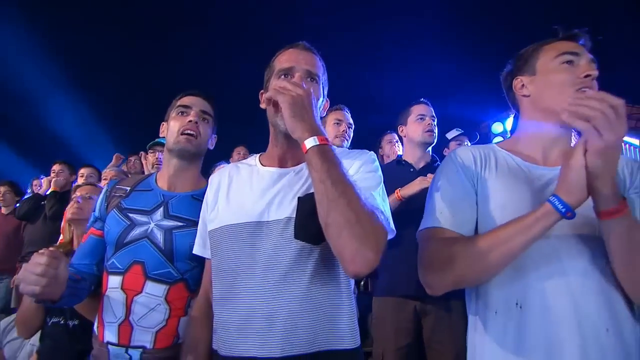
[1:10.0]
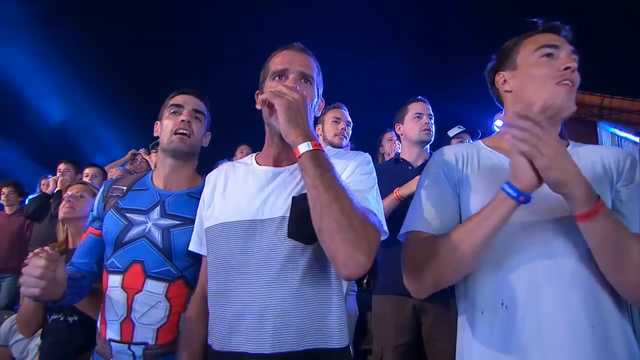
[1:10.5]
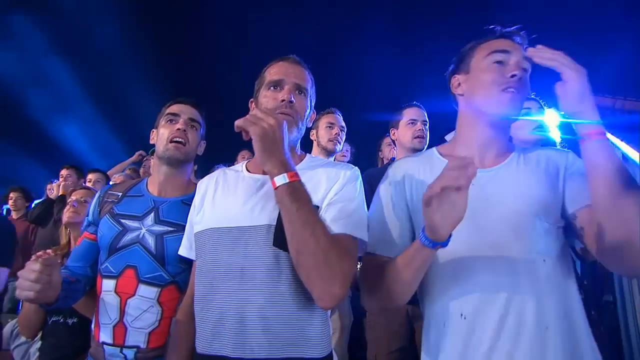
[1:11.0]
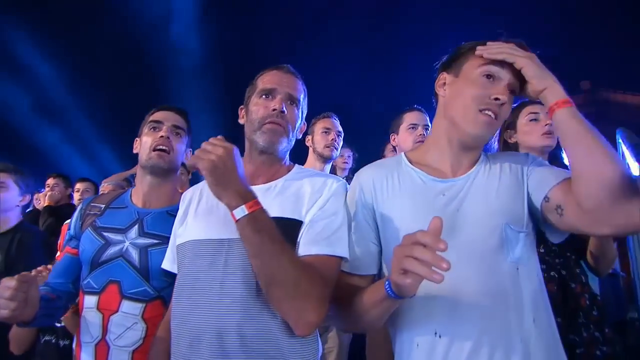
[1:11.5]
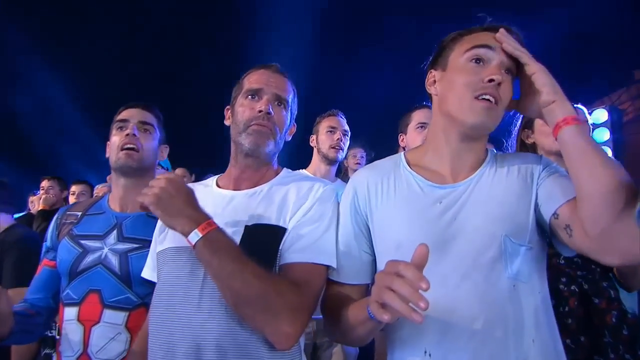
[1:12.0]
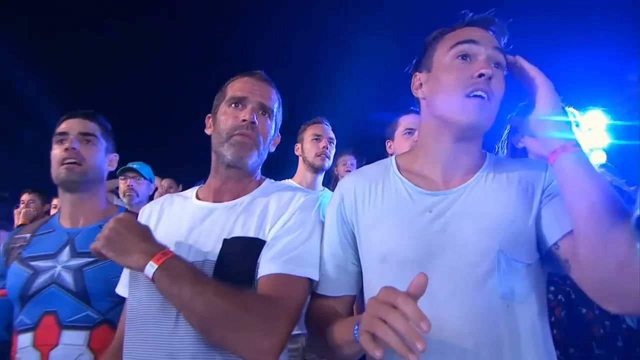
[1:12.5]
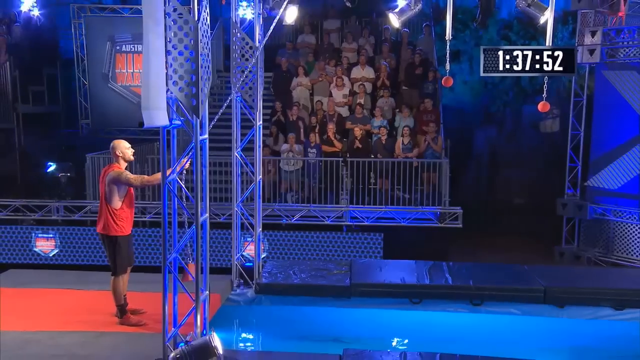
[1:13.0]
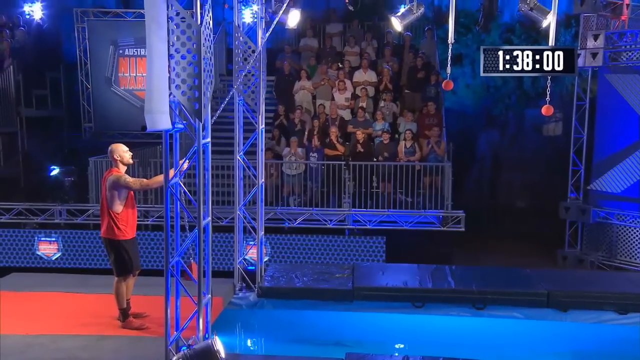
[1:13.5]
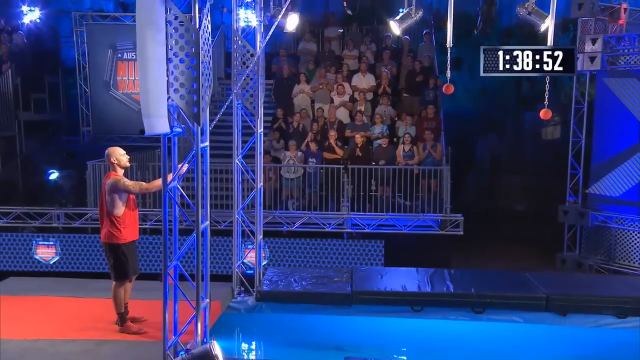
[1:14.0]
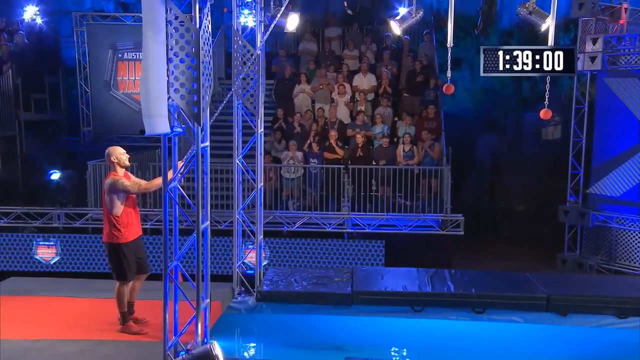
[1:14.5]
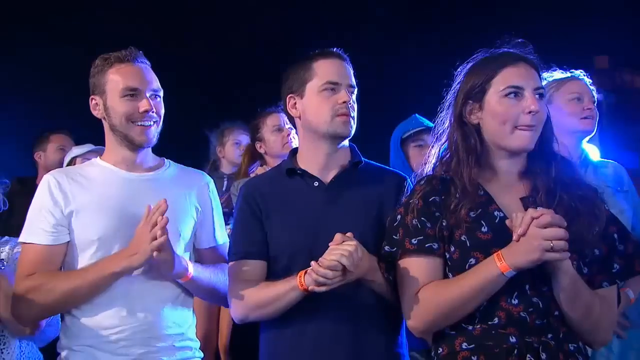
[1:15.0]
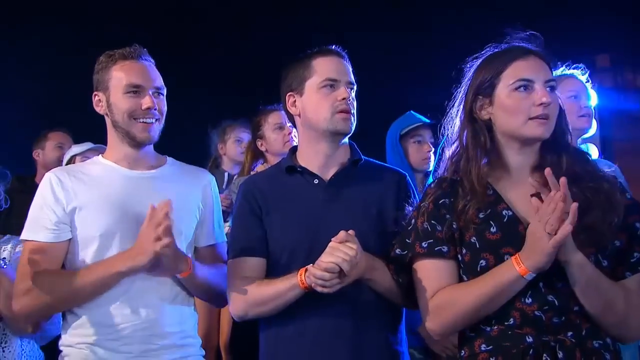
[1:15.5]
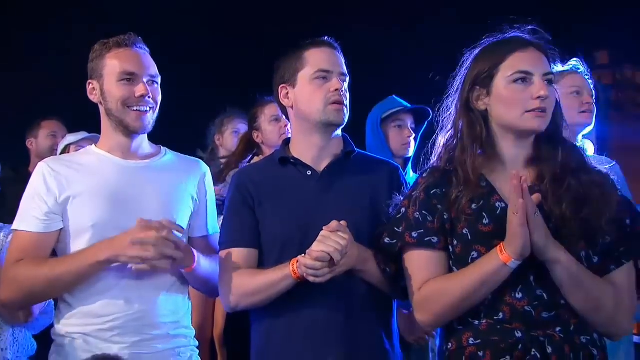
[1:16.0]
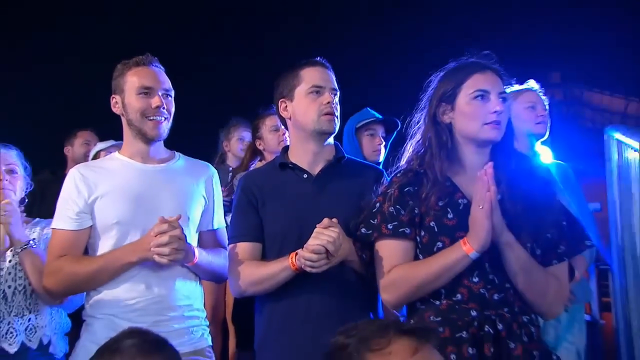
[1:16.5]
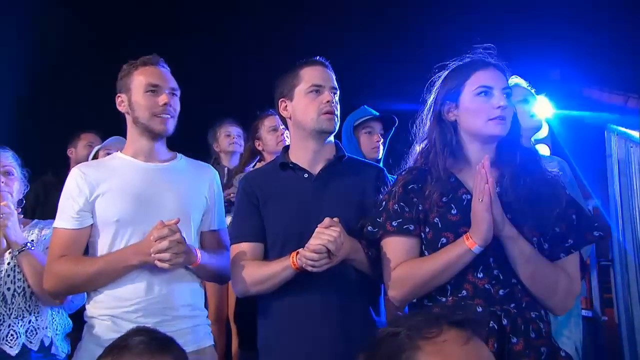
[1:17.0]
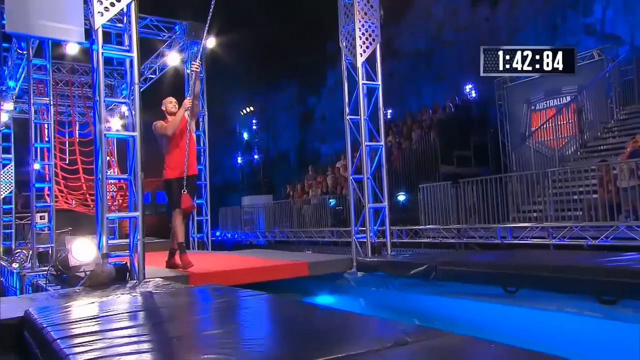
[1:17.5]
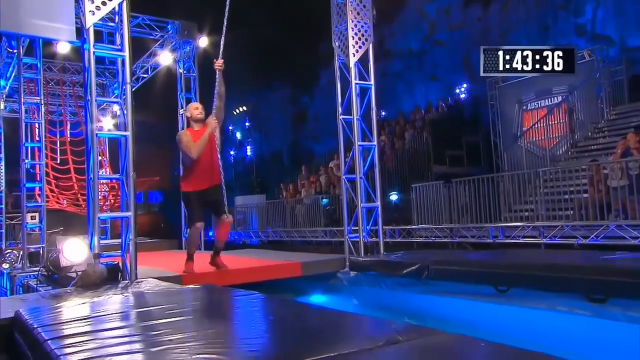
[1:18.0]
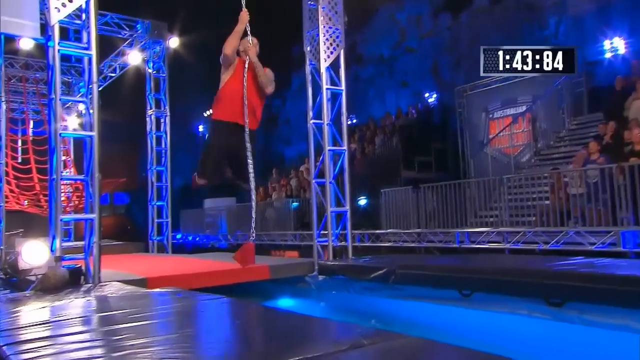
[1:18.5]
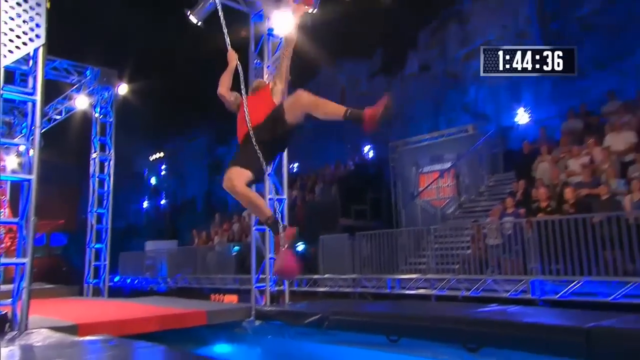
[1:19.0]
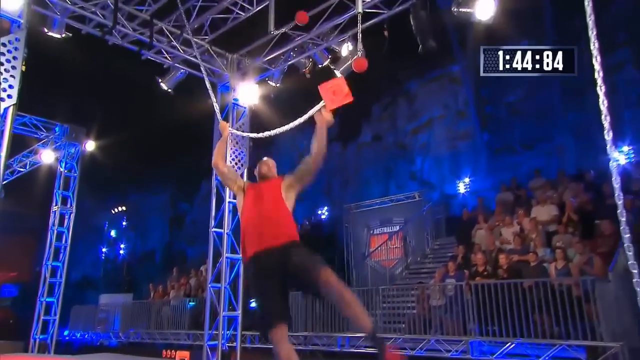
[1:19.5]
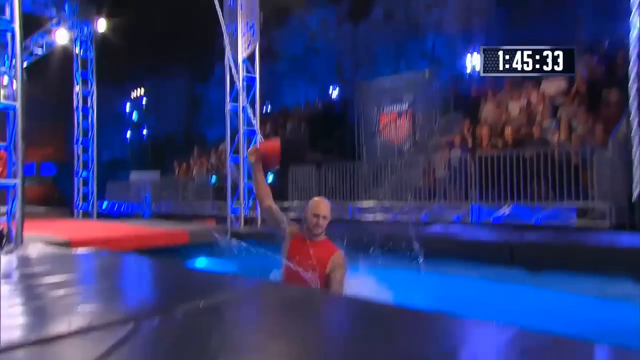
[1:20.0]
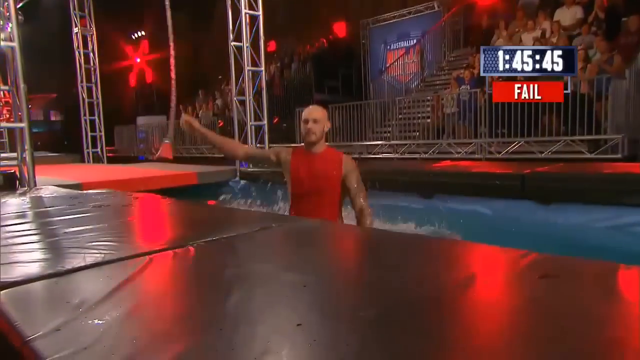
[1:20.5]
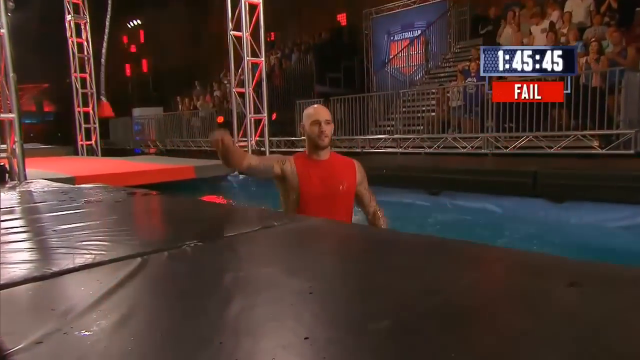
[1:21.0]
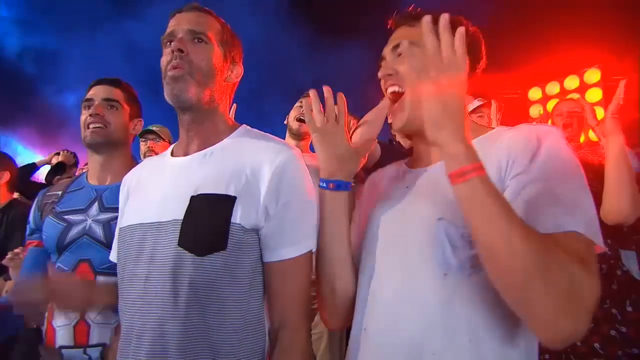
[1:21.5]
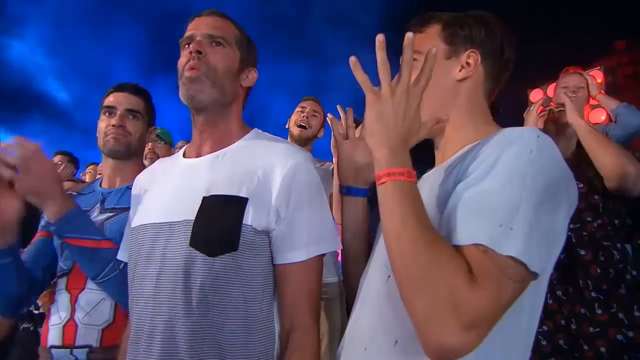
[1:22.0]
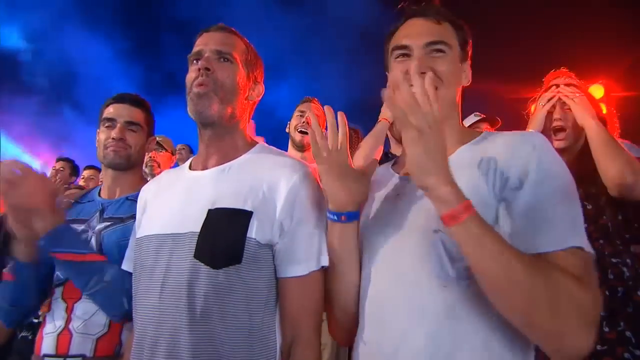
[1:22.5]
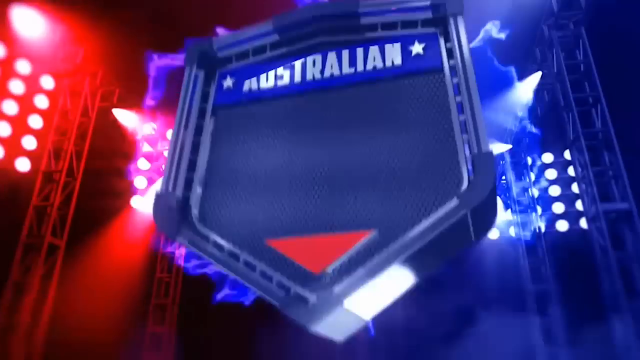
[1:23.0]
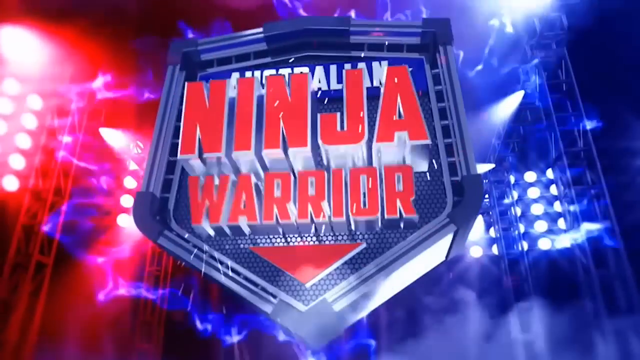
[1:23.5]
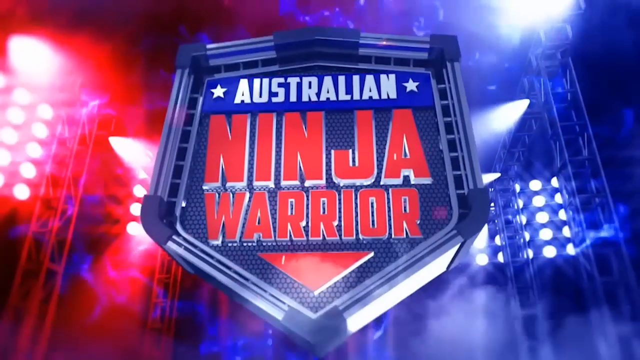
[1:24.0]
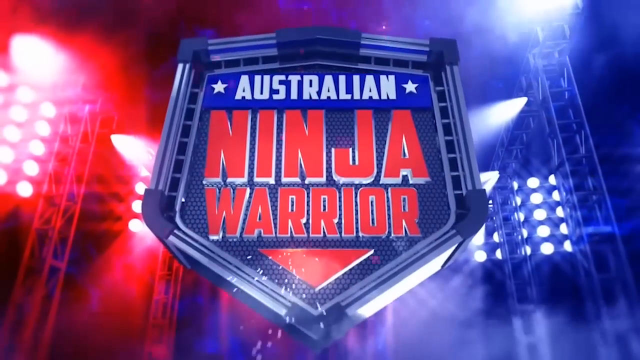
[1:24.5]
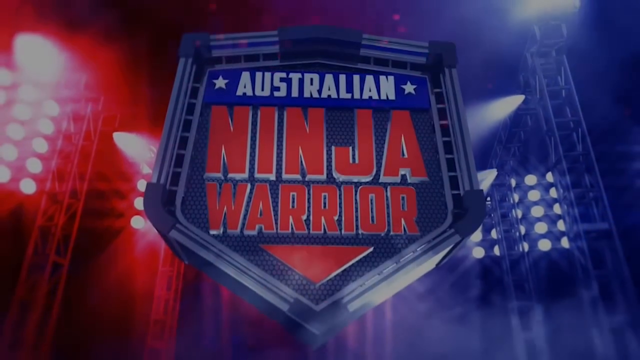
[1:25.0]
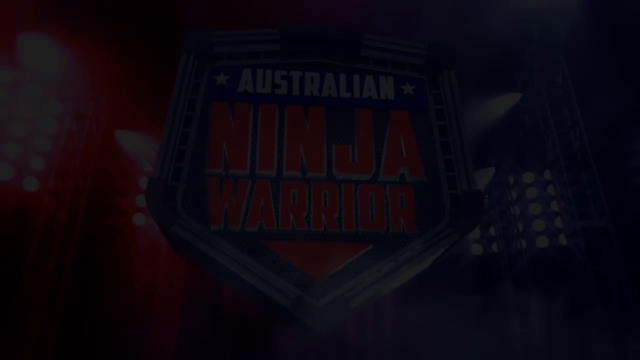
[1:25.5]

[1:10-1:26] The participant holds the metal chain and comes back, then holds on to it again. He cannot hold on to the small chain and falls into the pool of water. The audience's faces show they were rooting for him. The area is enclosed.